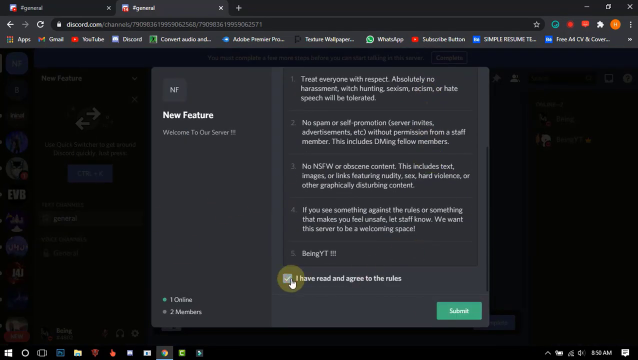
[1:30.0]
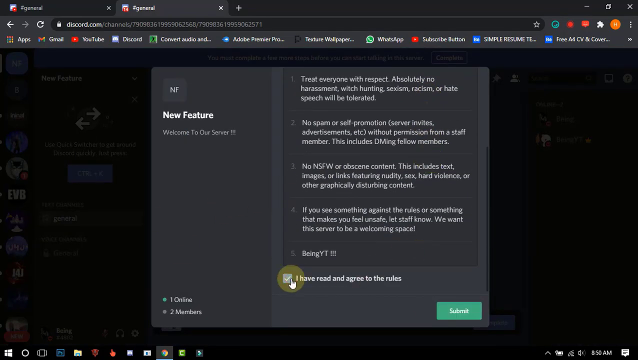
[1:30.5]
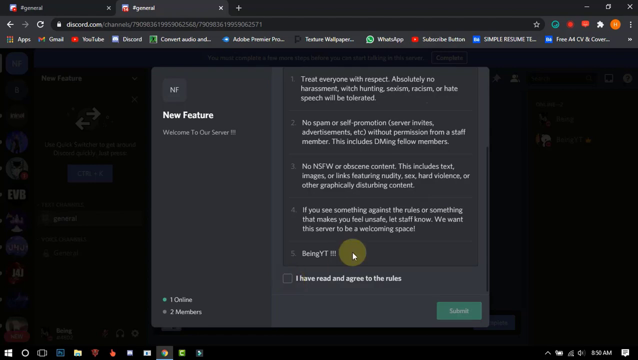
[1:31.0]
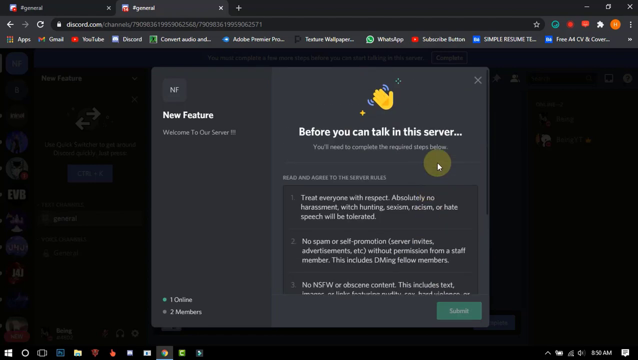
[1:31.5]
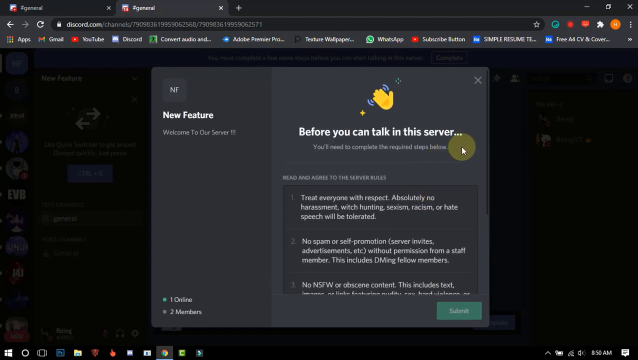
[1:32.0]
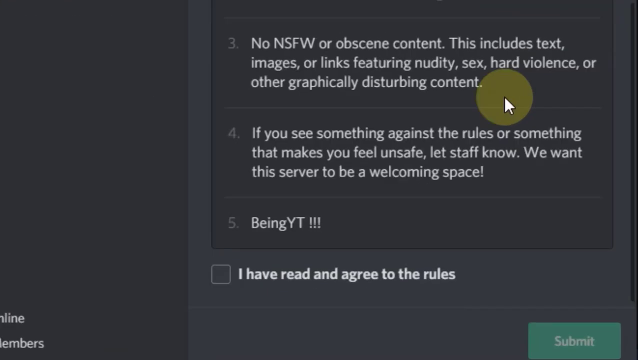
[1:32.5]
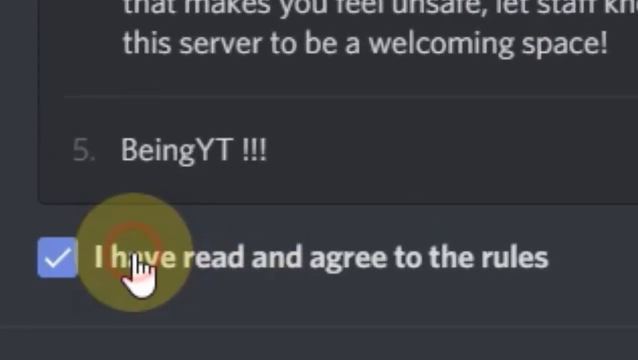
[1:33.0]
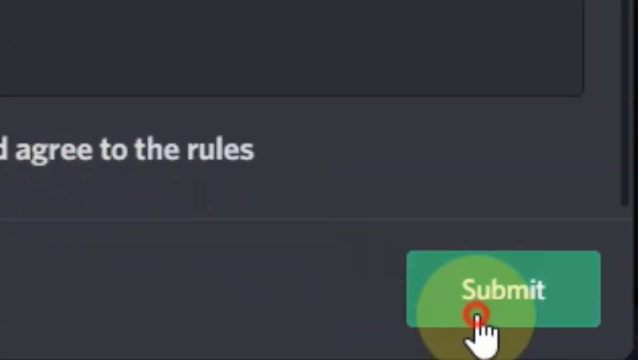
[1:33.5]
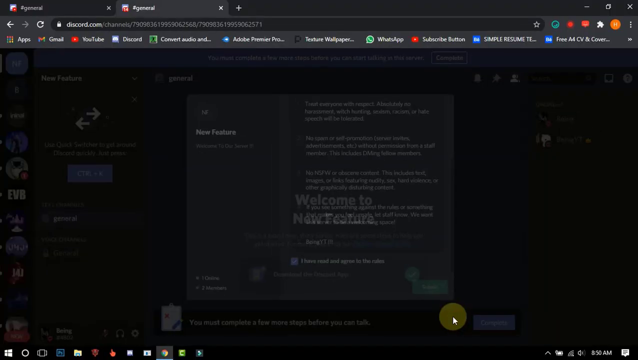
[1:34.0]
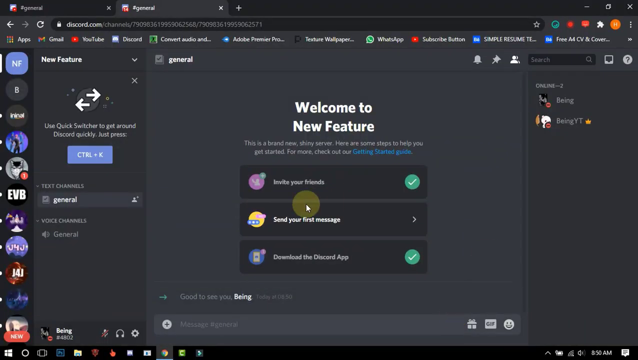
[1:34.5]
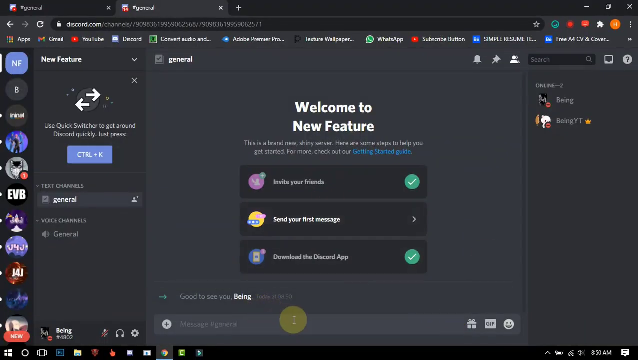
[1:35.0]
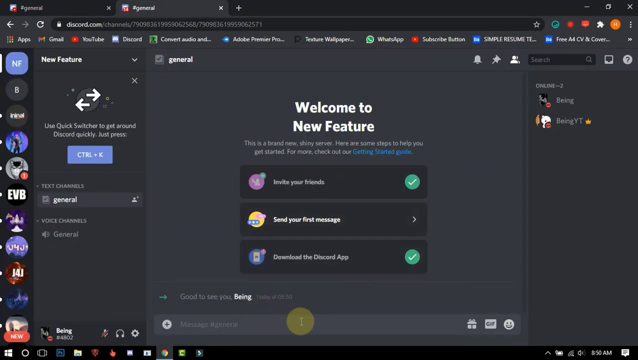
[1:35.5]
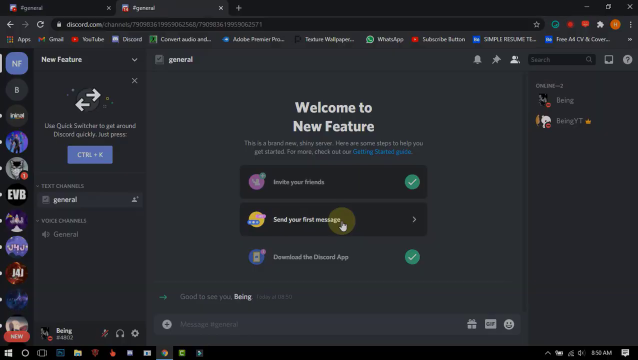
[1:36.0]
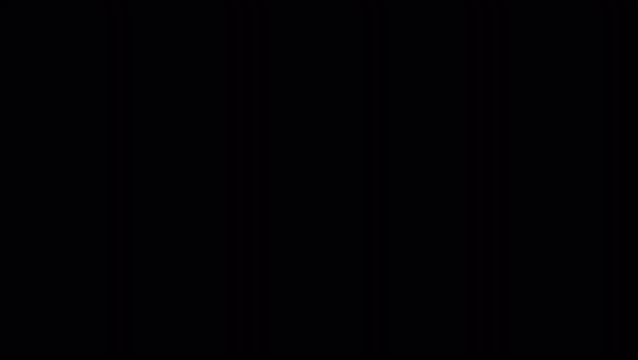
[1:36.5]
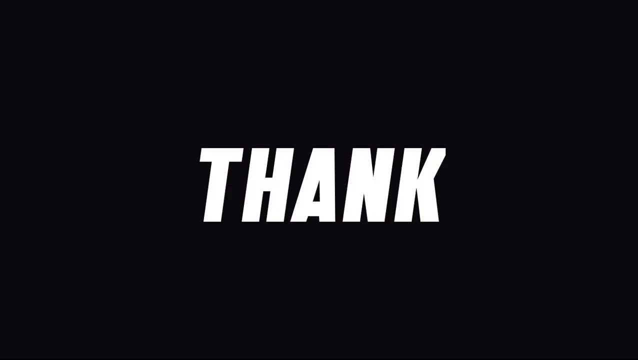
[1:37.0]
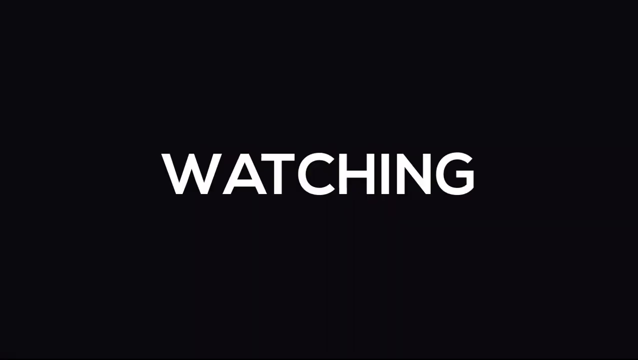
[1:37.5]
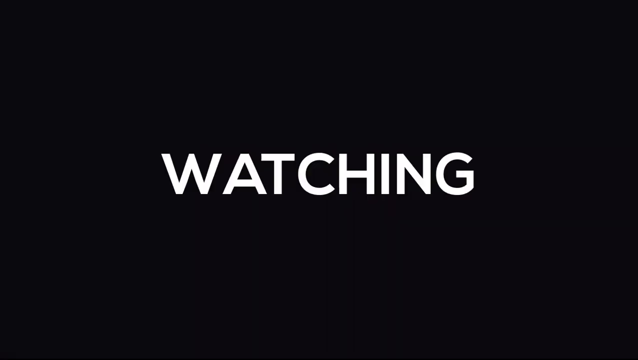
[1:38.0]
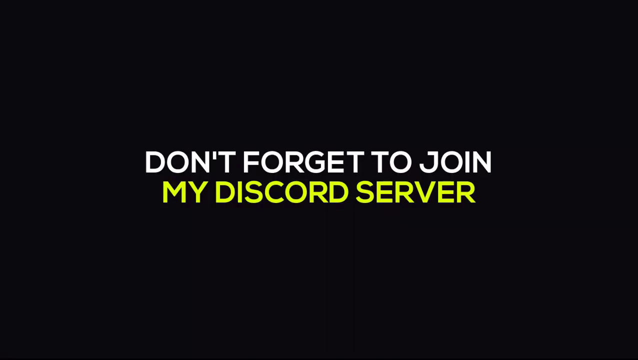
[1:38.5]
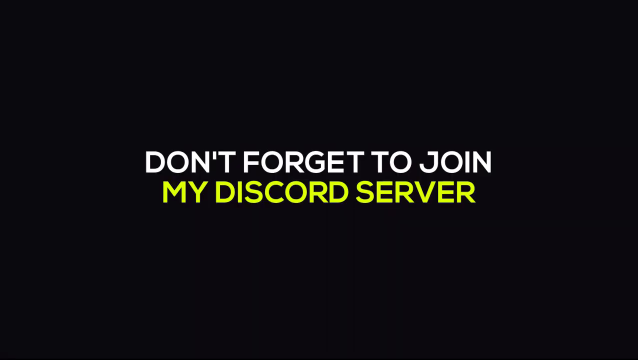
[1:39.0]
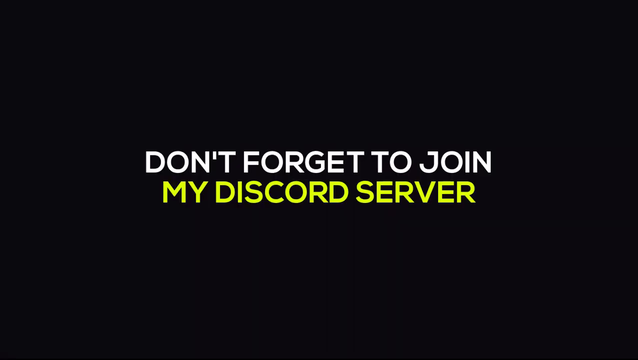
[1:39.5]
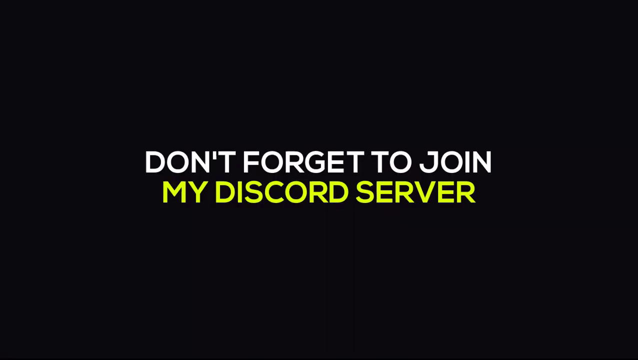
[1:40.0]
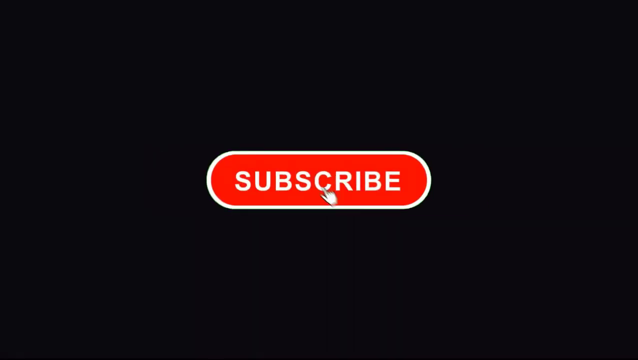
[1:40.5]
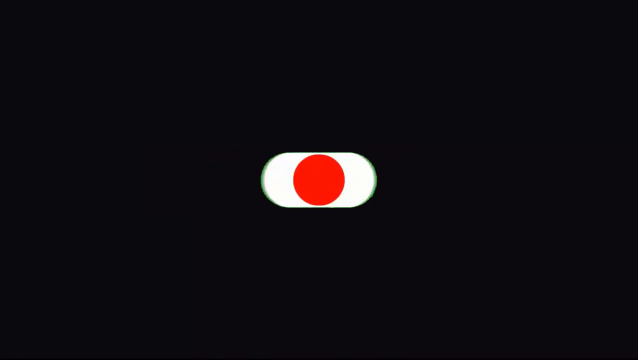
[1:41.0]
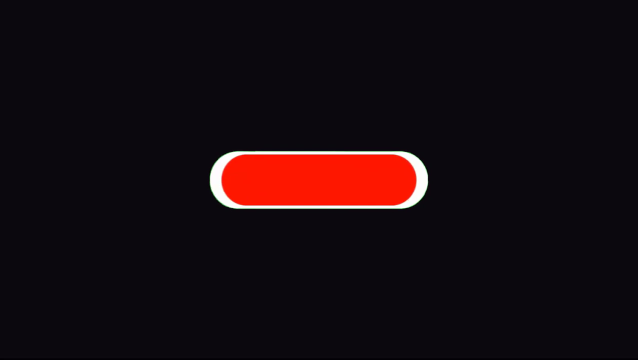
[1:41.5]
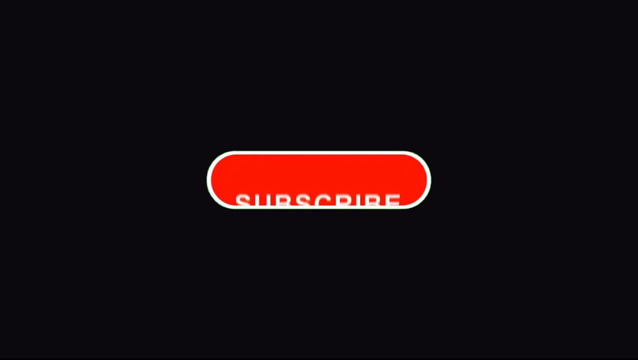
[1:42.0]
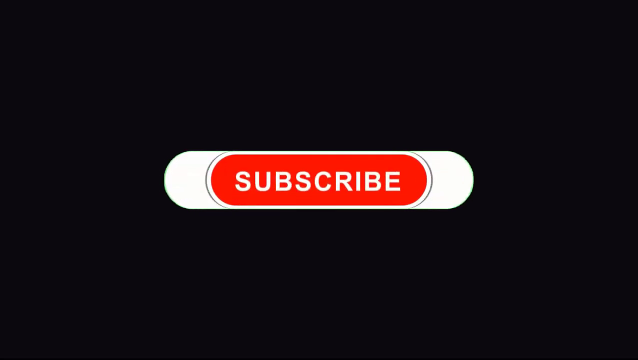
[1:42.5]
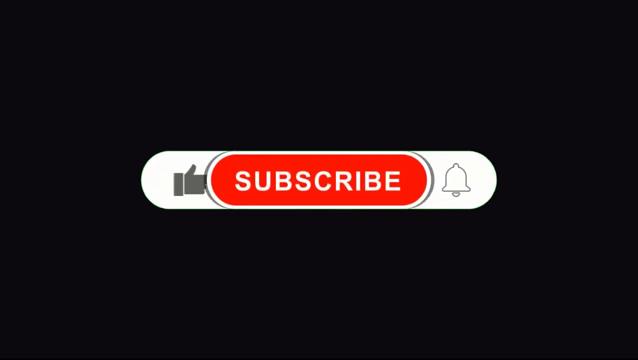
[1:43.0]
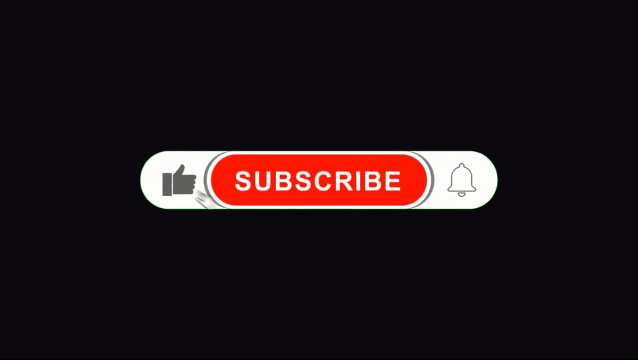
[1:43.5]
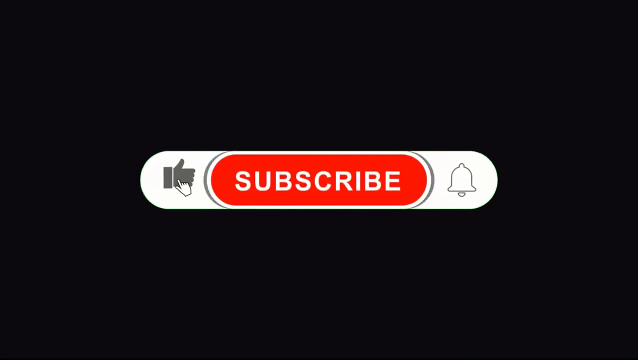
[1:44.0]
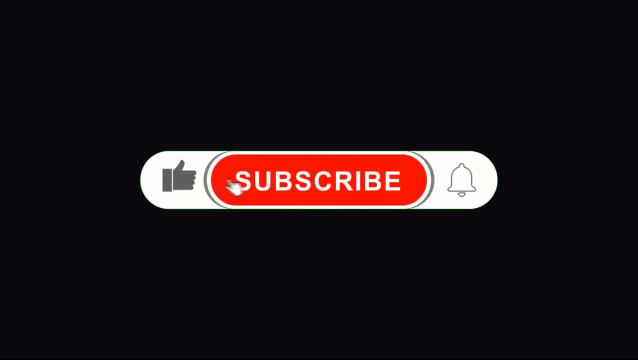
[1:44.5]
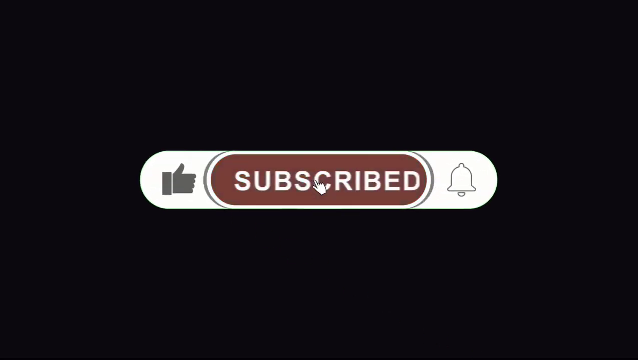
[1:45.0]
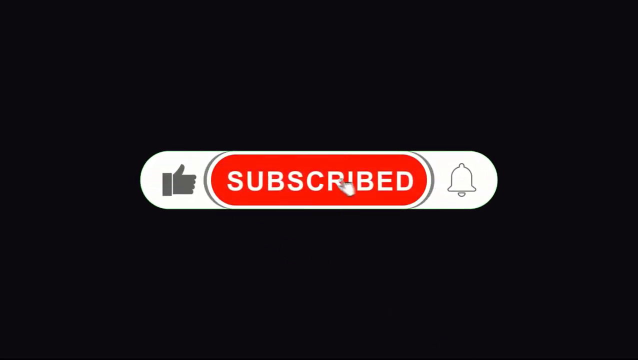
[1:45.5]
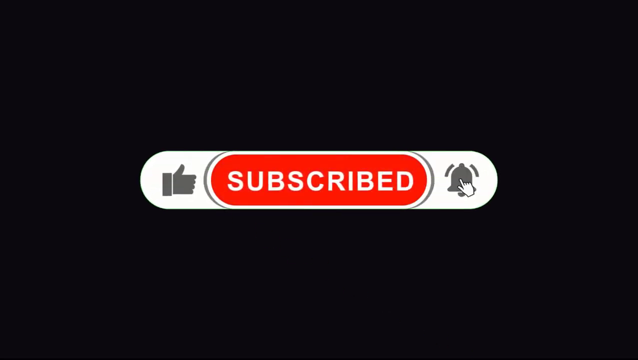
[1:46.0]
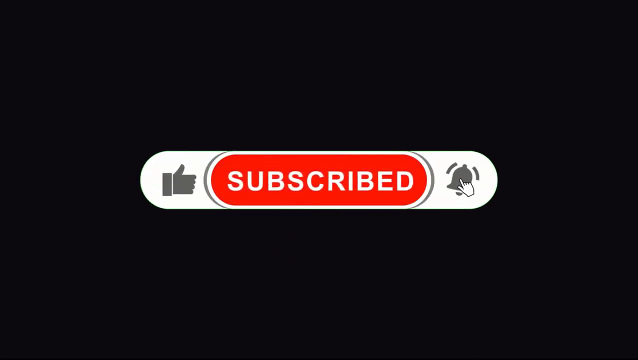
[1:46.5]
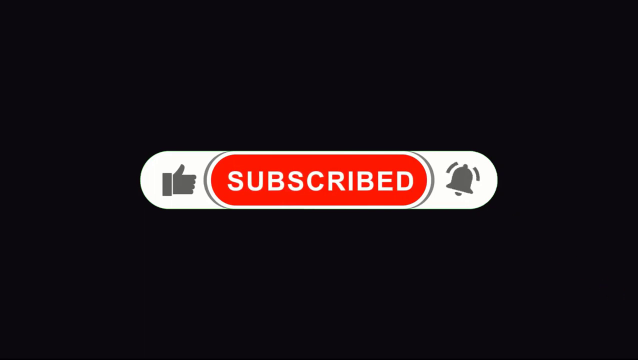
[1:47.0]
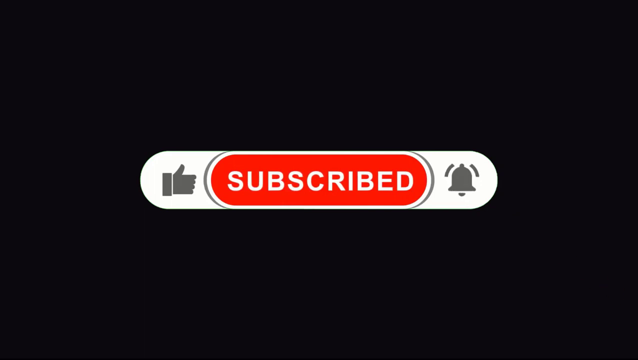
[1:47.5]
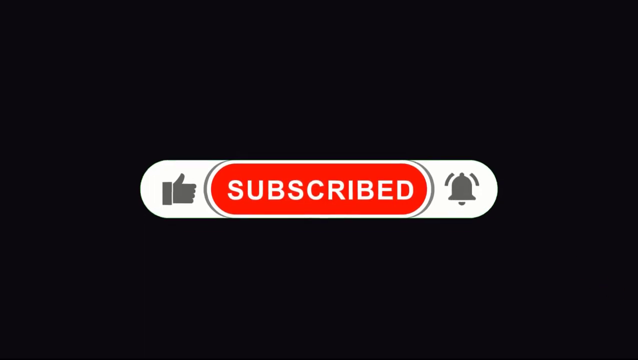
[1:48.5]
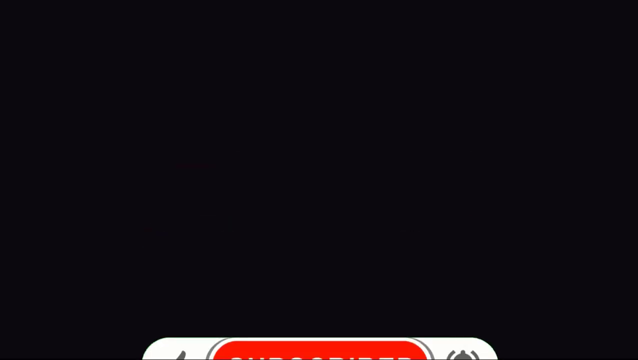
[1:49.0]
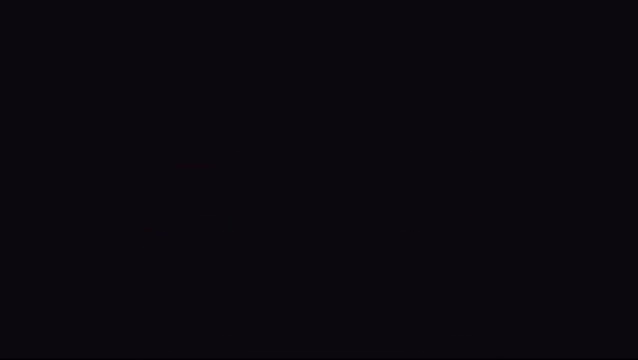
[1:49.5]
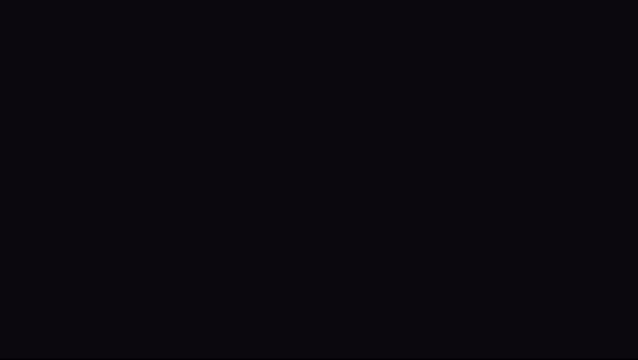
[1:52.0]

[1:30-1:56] The new feature server's rule menu shows all five rules. The box indicating the rules have been read and agreed to is selected, followed by the green clickable submit button at the bottom. The view zooms into this information to show the order in which to click the buttons, then returns to the main page of the new feature Discord server. The video fades to black, and the words "thank", "you", "for" and "watching" each appear and disappear in turn. "don't forget to join" appears in white and "my discord server" in yellow, then this disappears. A subscribe button animation appears, showing how to click to subscribe and turn on notifications for YouTube videos. The animation falls to the bottom of the screen, followed by five seconds of solid black.